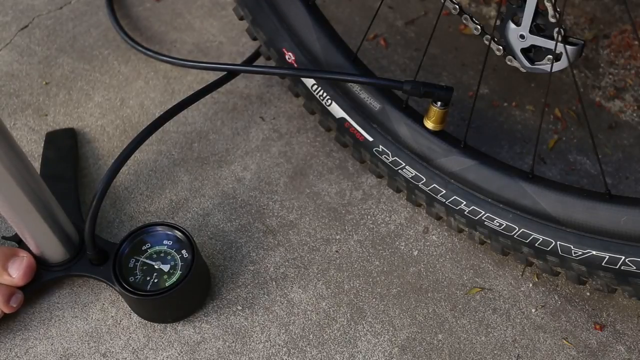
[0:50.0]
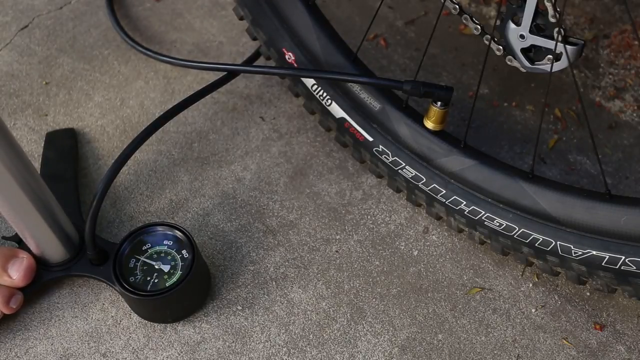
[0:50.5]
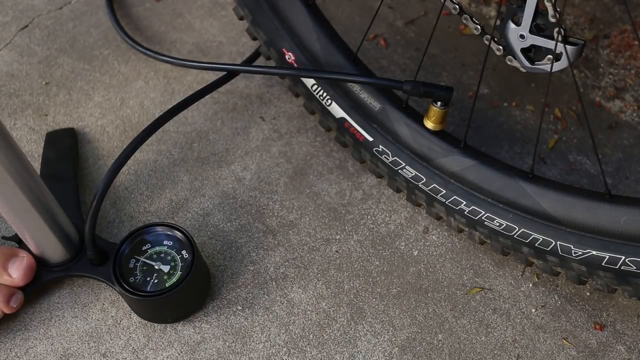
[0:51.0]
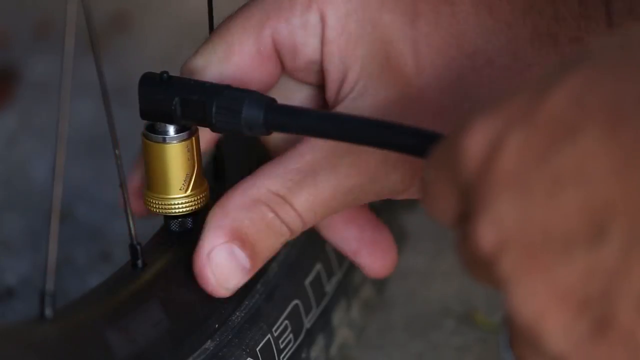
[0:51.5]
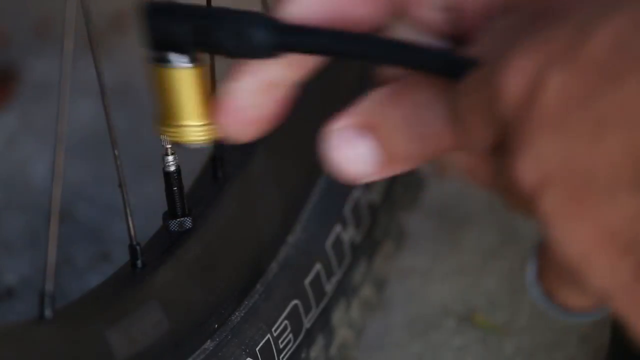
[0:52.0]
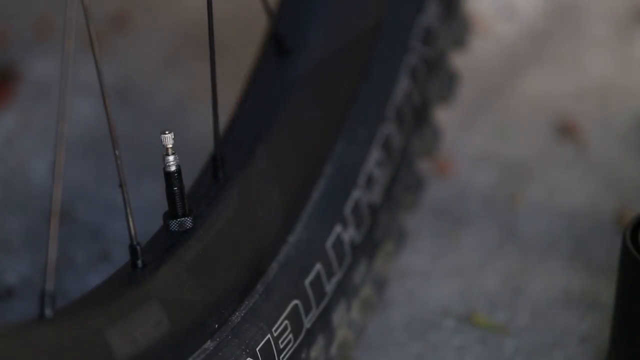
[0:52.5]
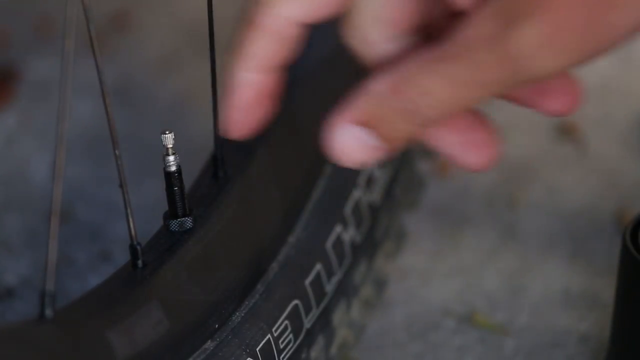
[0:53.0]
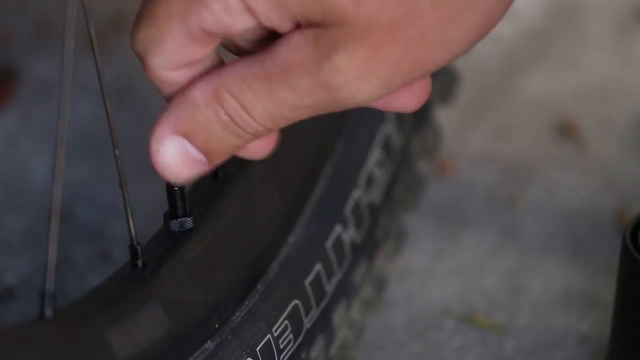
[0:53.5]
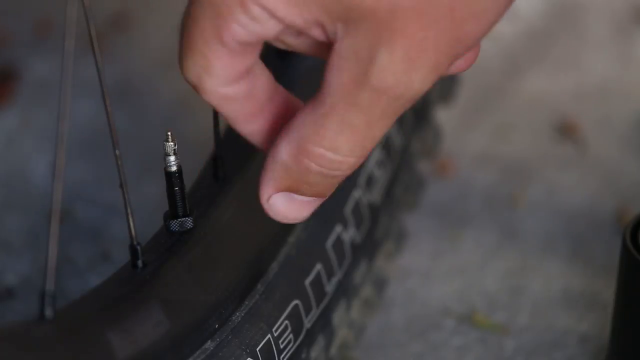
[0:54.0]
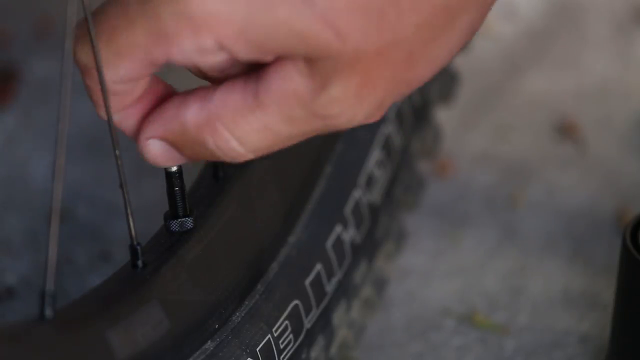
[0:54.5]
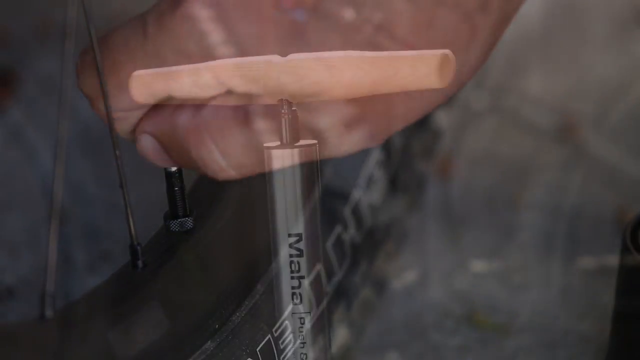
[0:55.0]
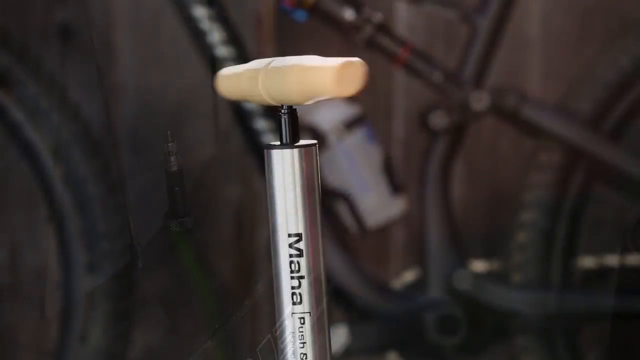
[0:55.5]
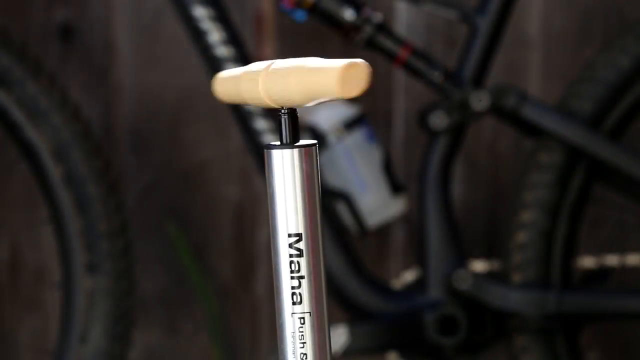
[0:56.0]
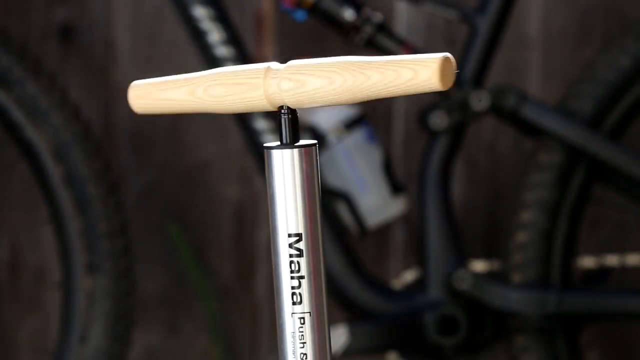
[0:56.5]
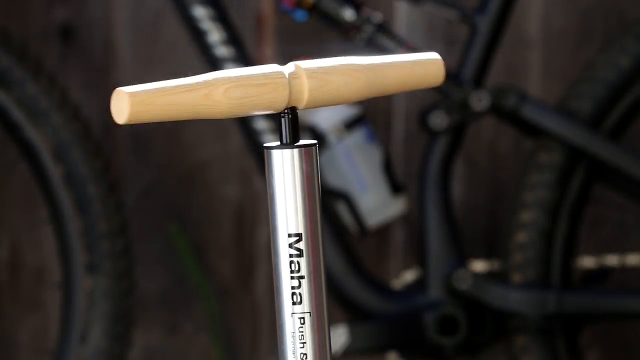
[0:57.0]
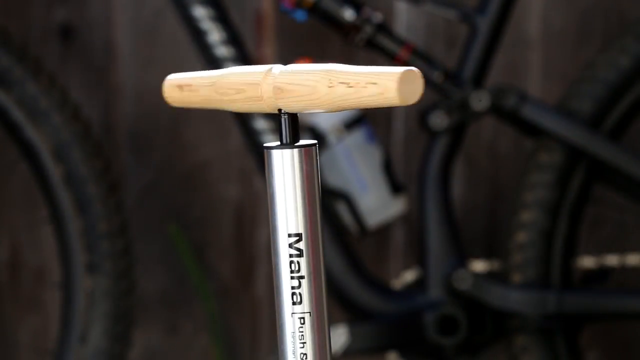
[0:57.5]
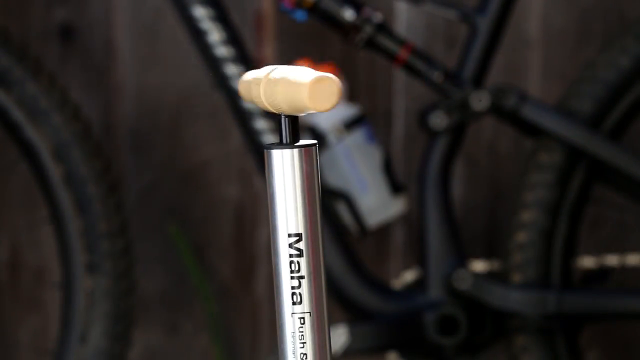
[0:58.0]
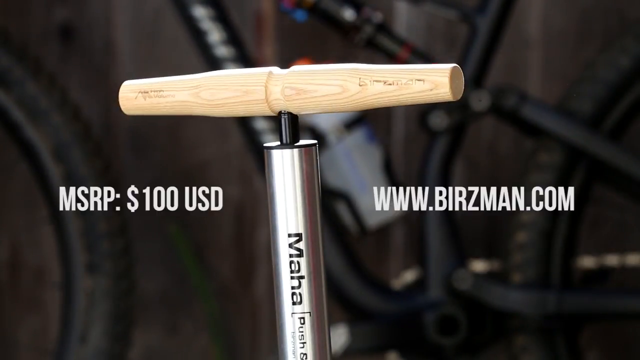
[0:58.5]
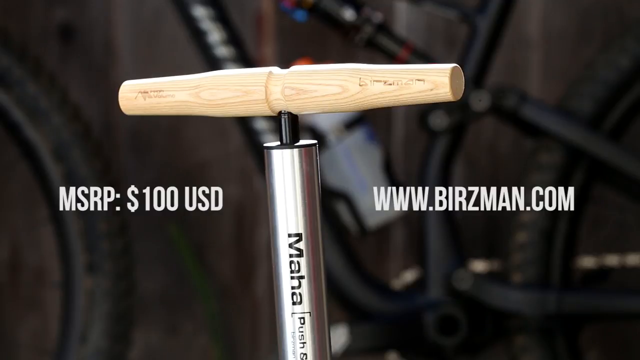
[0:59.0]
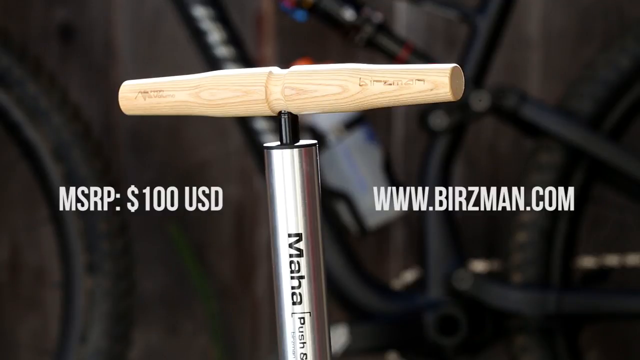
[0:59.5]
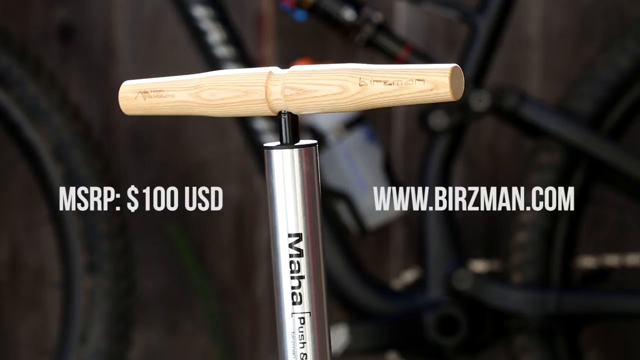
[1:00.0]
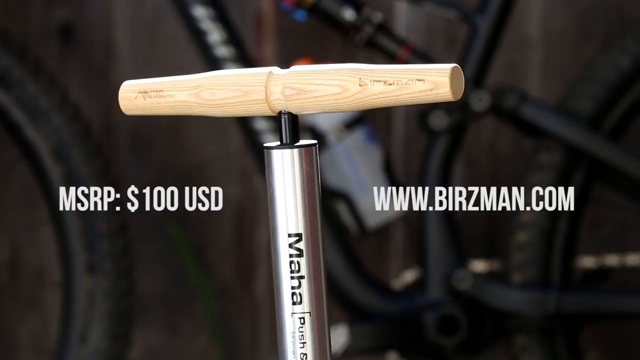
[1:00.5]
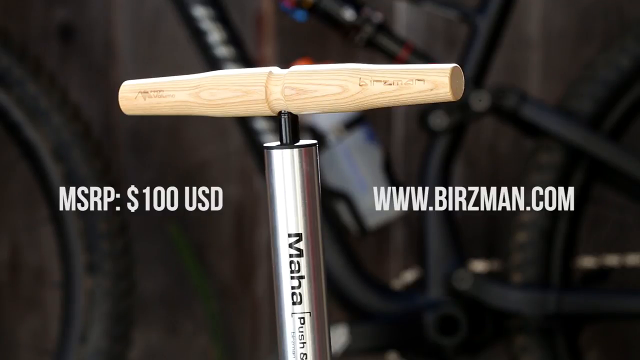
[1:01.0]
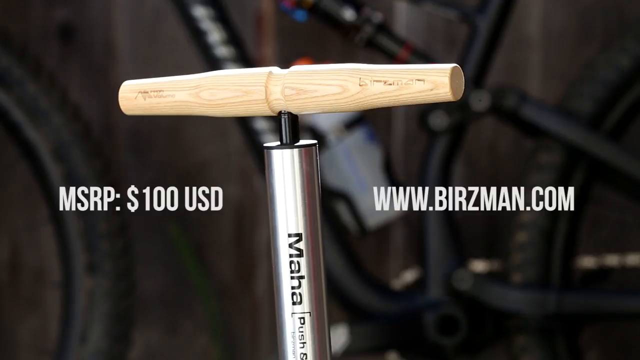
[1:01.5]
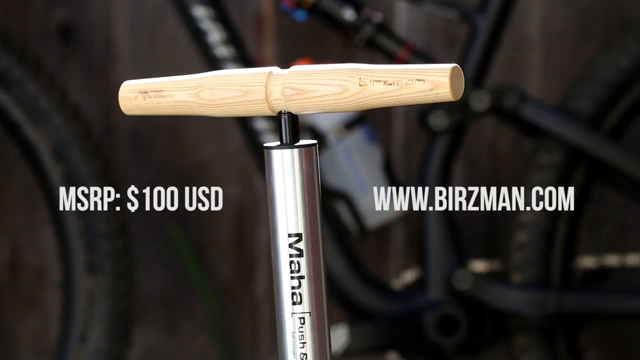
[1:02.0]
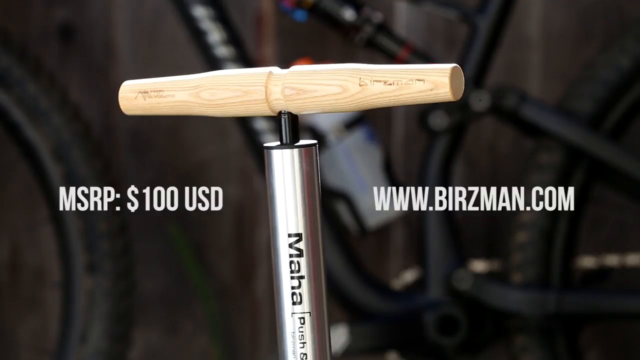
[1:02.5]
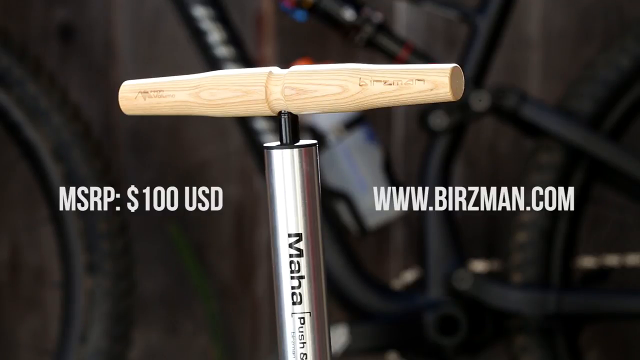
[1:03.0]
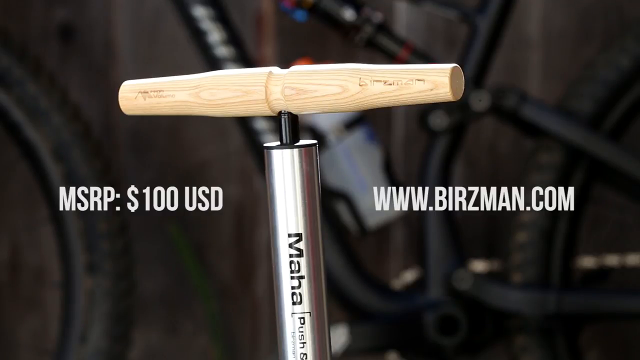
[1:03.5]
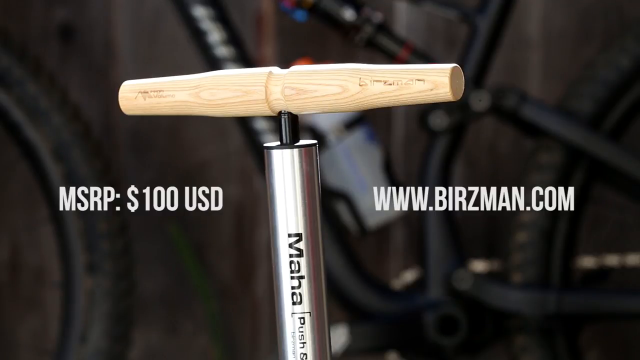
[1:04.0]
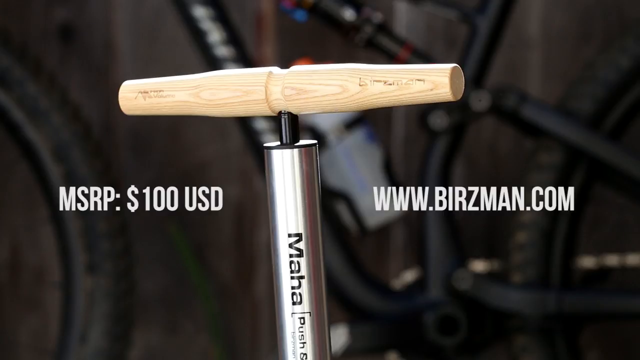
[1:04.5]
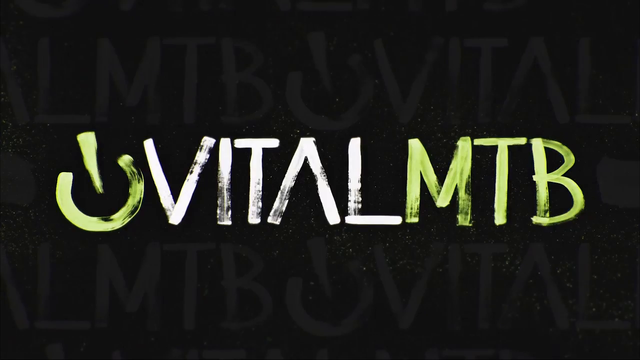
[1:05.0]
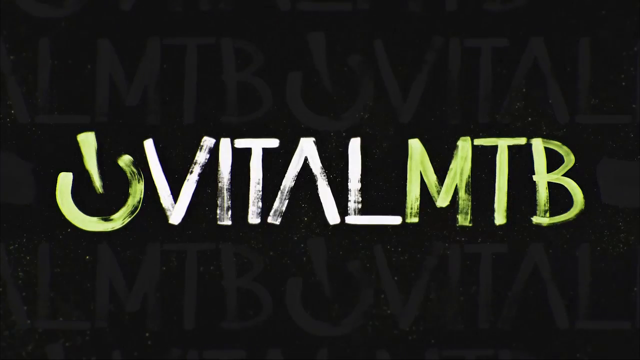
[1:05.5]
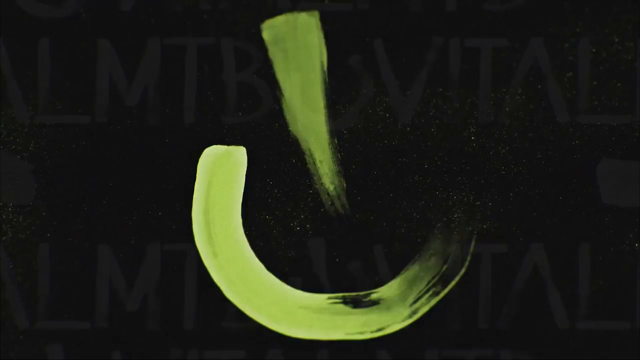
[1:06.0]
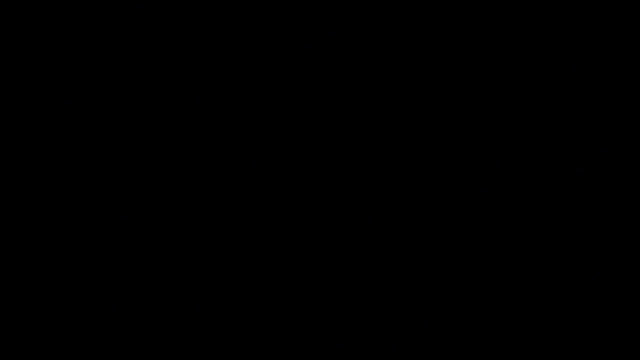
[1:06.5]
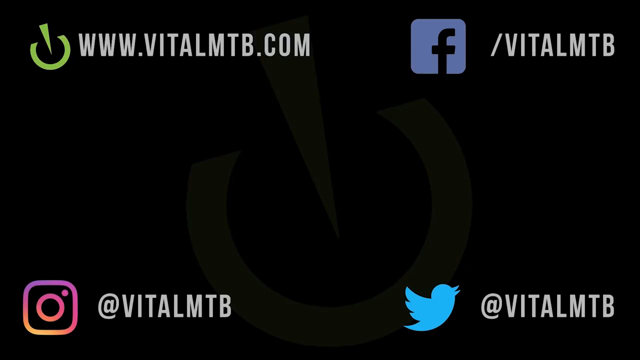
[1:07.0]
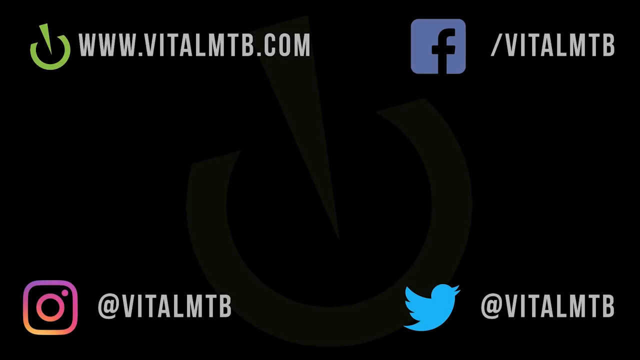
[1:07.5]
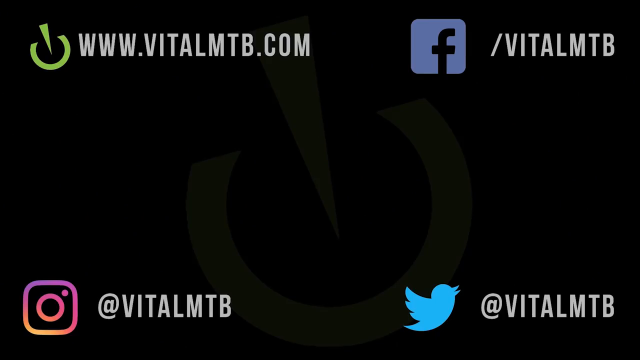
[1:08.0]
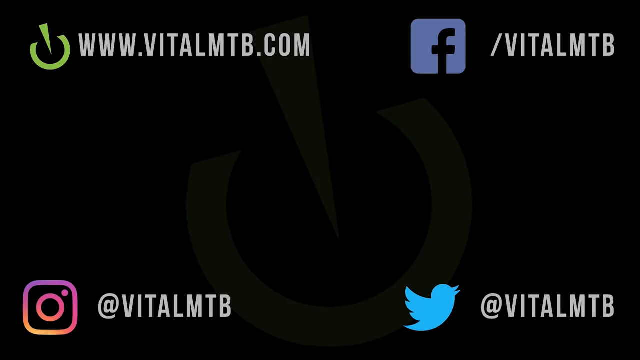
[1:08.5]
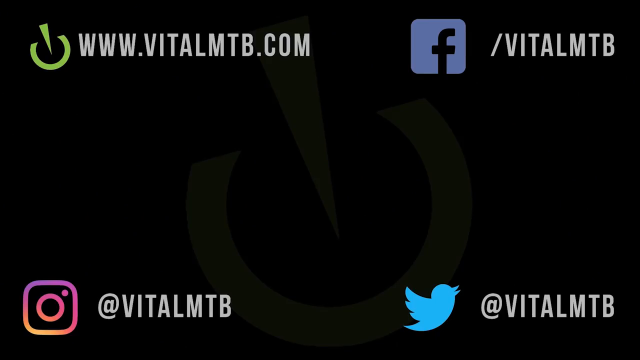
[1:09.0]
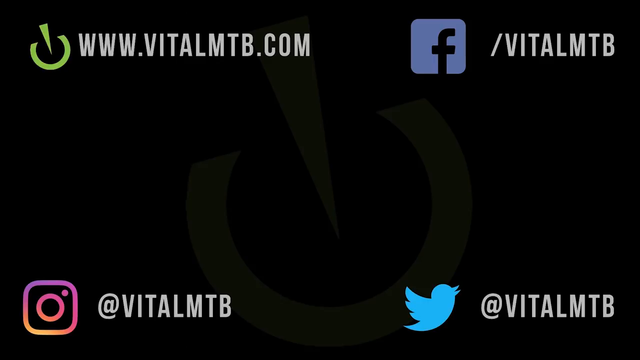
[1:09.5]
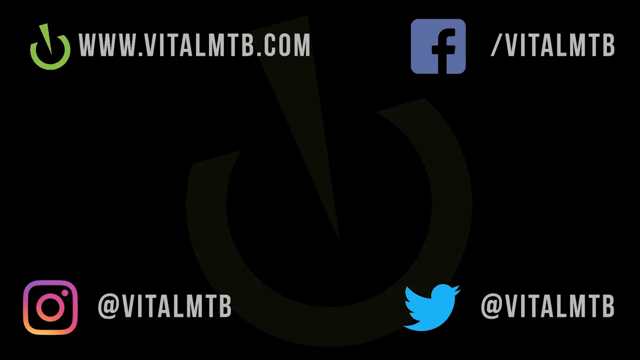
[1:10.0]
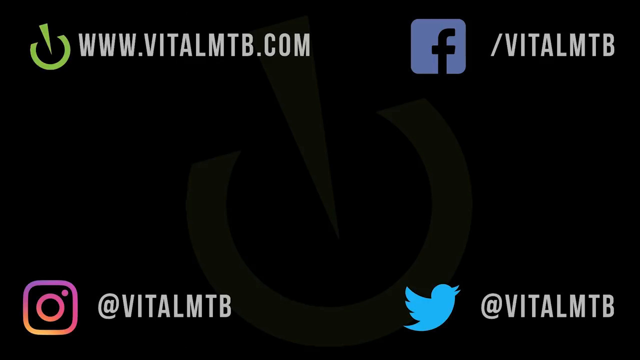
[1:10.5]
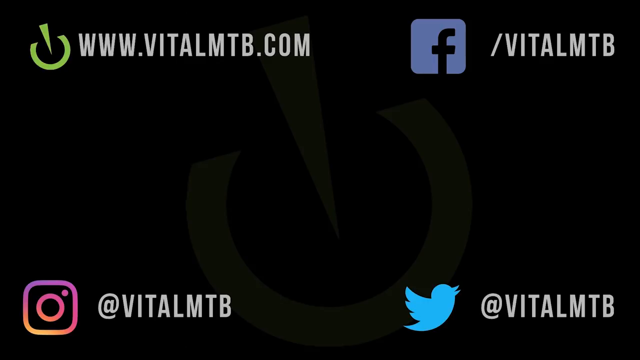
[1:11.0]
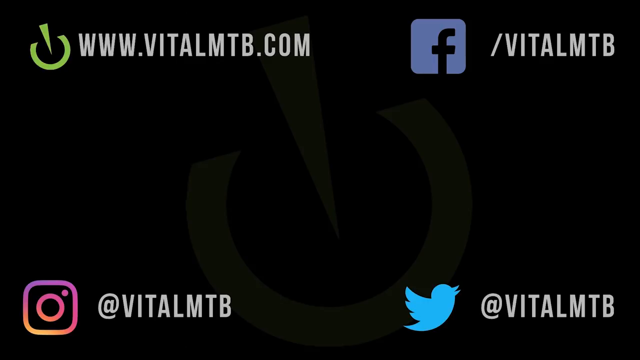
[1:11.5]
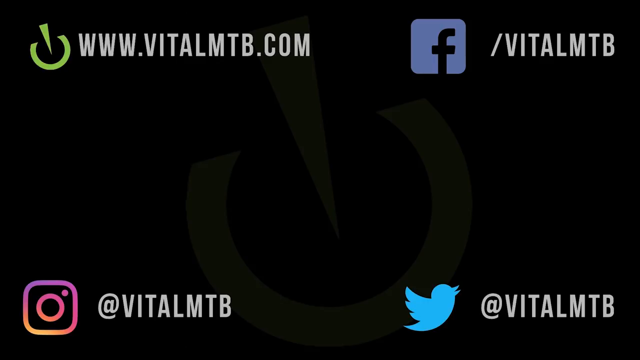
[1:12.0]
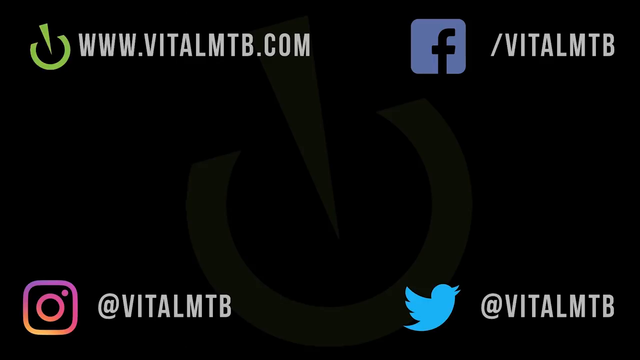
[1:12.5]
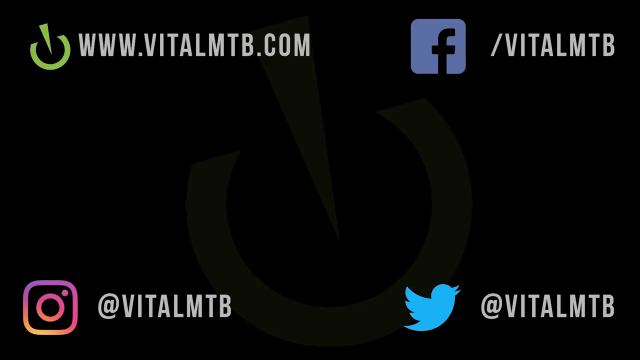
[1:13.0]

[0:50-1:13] The person uses the pressure pump to put air in the wheel. Instructions on how to use the pressure pump are written on the screen in a white, bold font. A dark black bicycle is visible behind, with its water bottle also visible. Only the bicycle, the person and the pressure pump are visible. The video appears to be advertising the pressure pump: the price of the equipment is displayed, 100 US dollars, along with contact details for Facebook, Instagram and Twitter and a link for getting in touch.